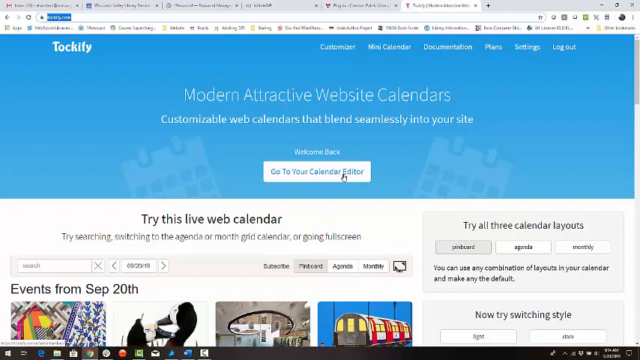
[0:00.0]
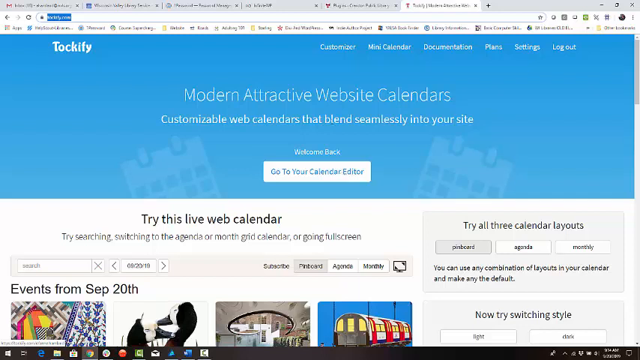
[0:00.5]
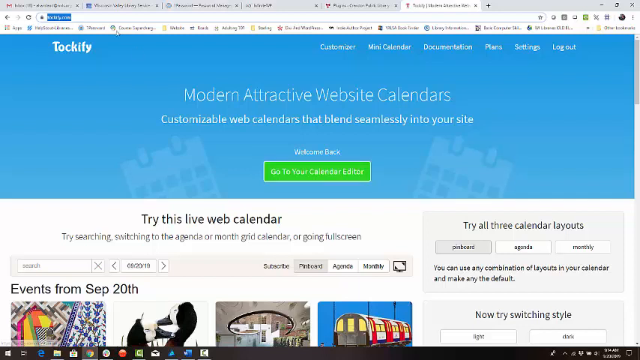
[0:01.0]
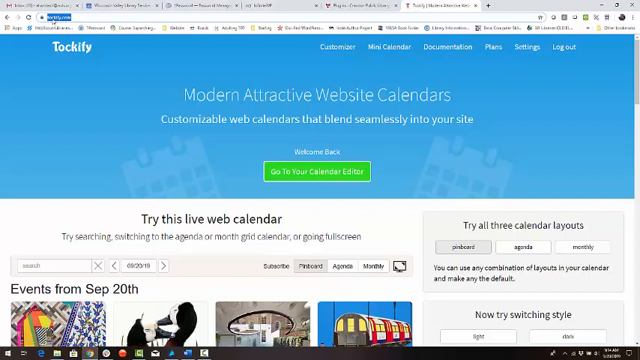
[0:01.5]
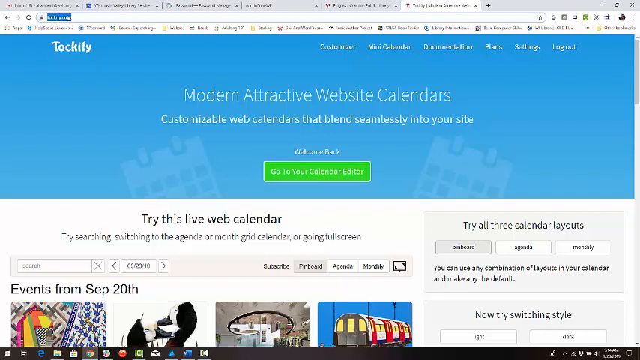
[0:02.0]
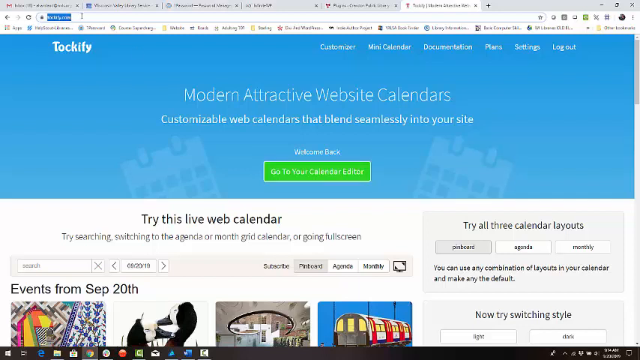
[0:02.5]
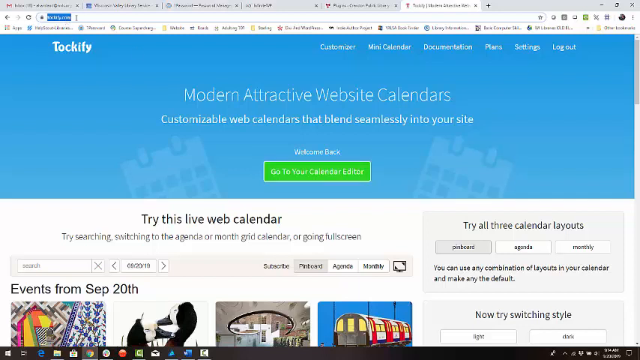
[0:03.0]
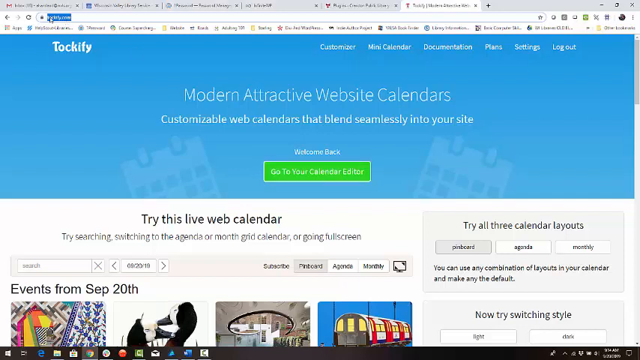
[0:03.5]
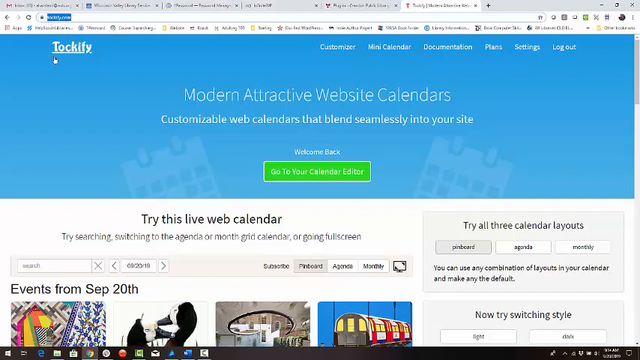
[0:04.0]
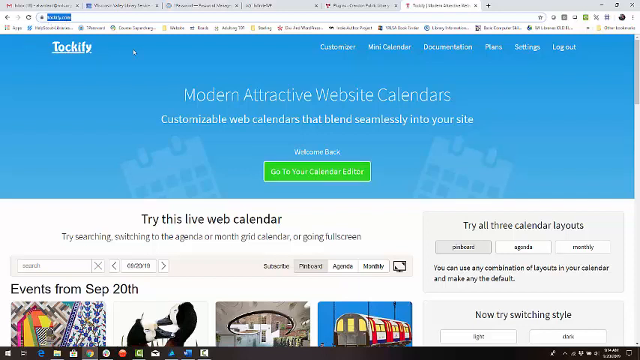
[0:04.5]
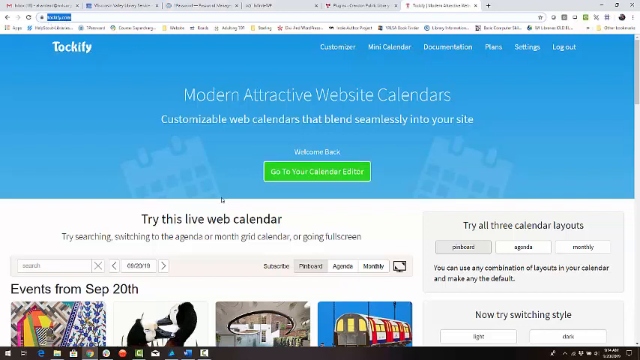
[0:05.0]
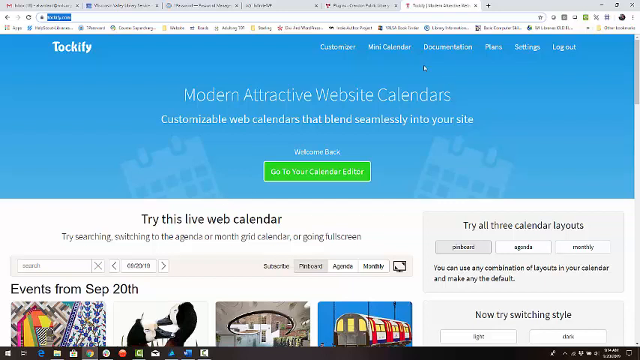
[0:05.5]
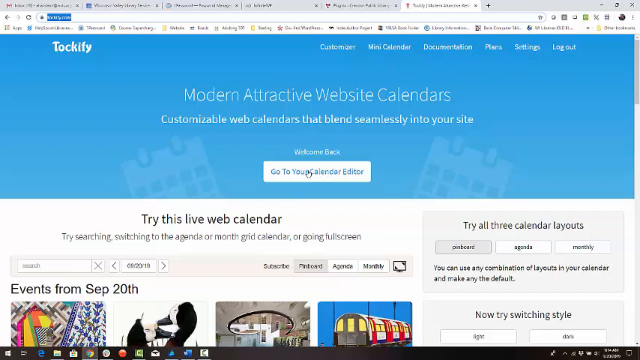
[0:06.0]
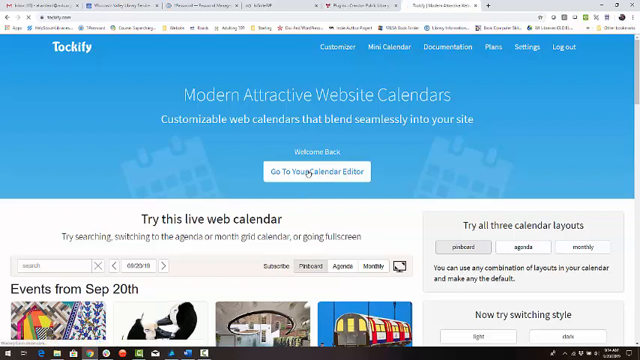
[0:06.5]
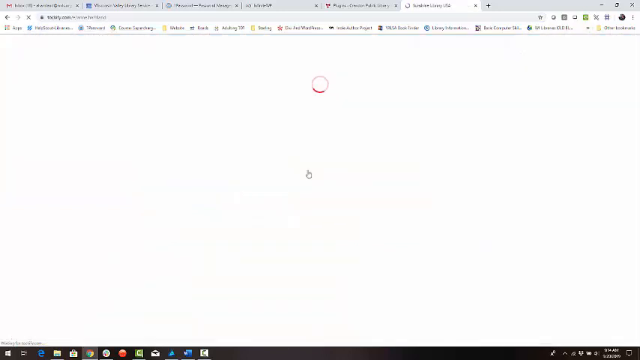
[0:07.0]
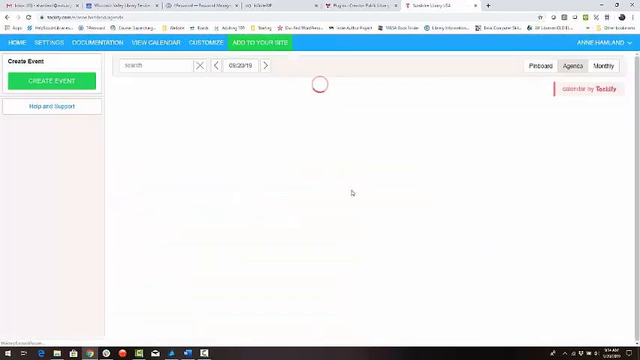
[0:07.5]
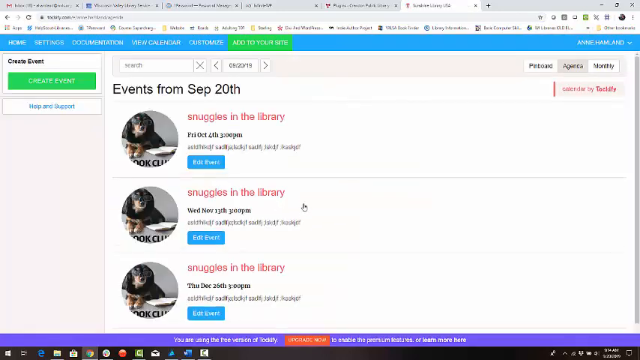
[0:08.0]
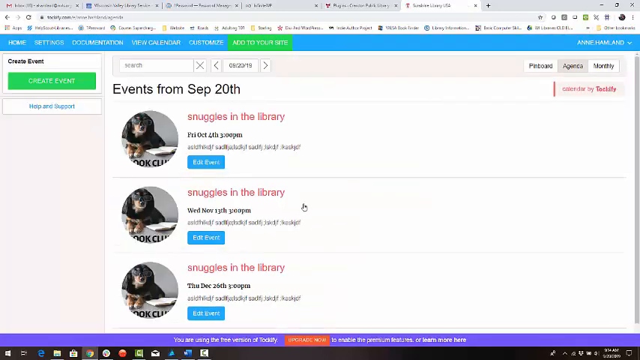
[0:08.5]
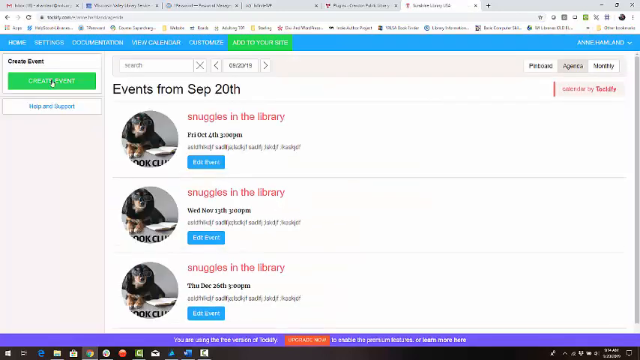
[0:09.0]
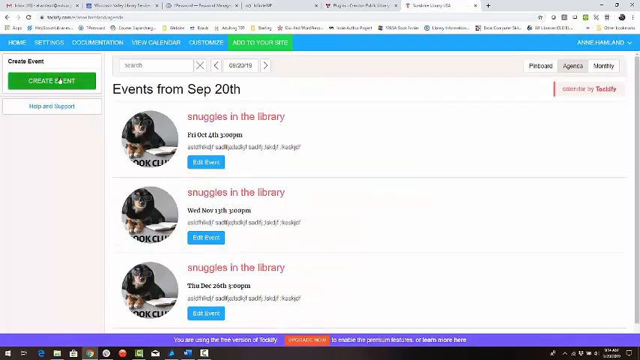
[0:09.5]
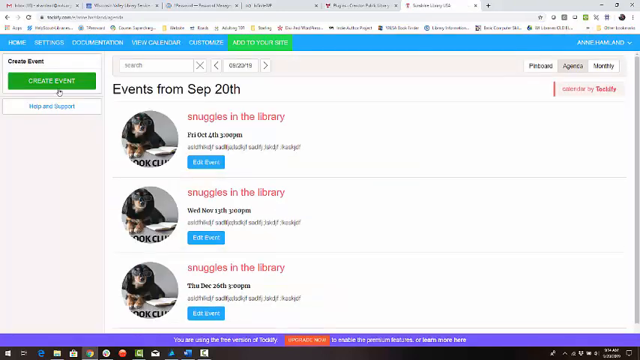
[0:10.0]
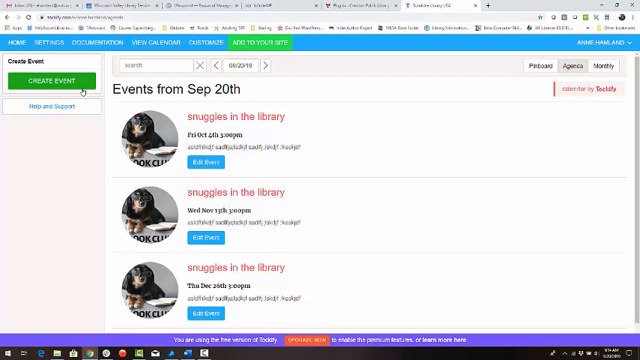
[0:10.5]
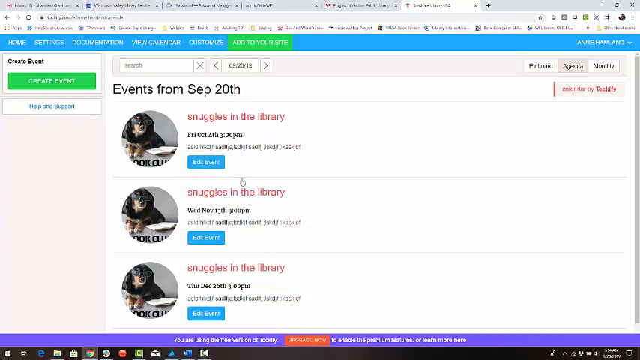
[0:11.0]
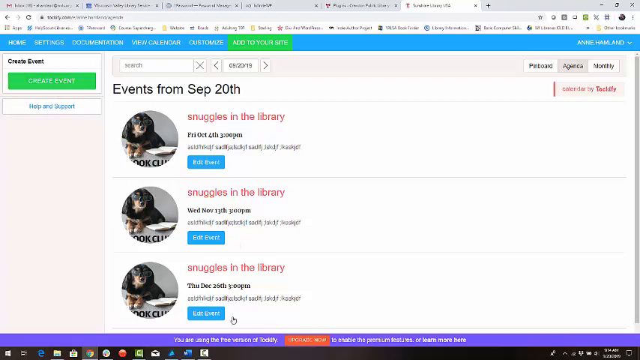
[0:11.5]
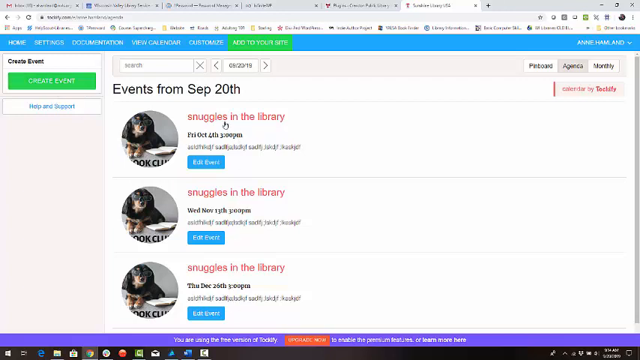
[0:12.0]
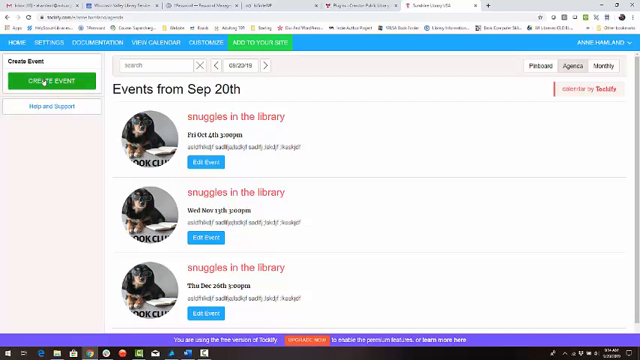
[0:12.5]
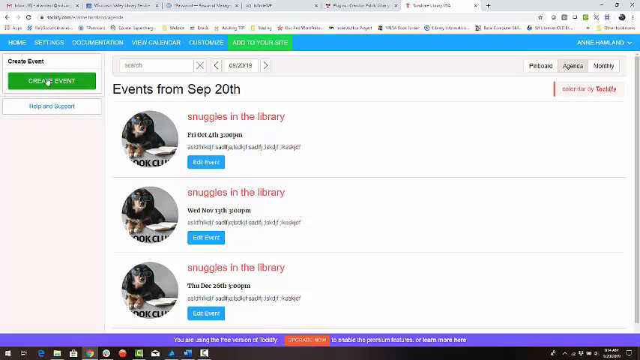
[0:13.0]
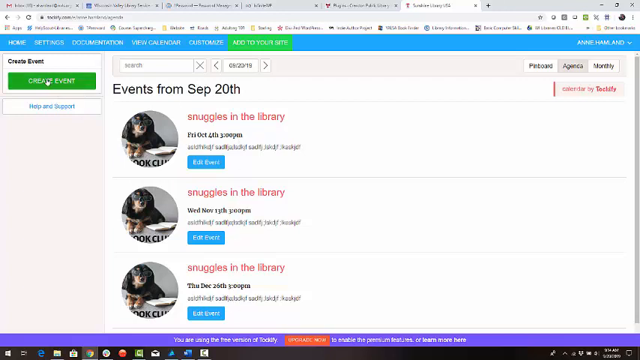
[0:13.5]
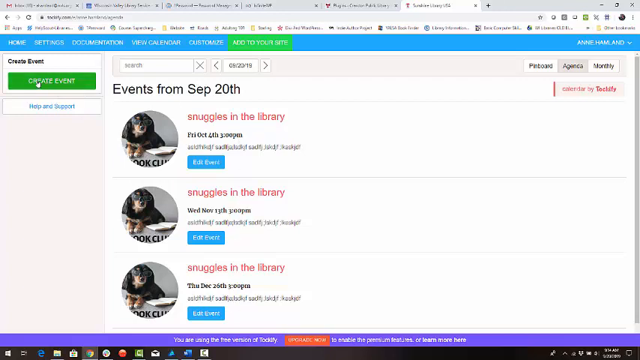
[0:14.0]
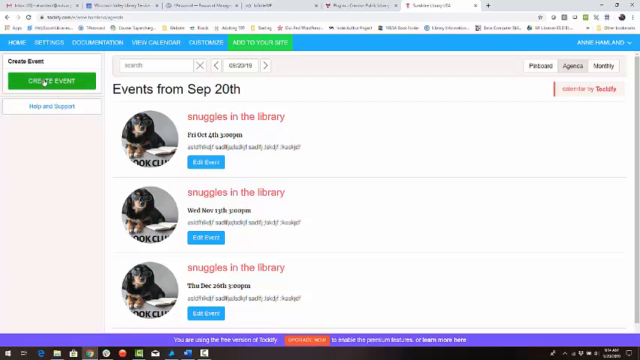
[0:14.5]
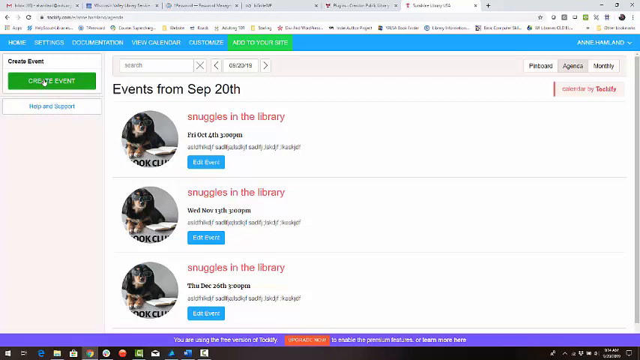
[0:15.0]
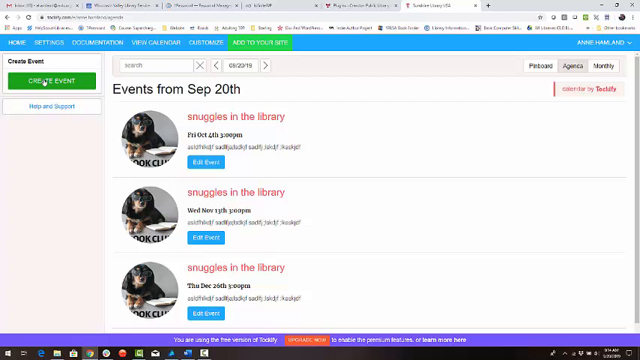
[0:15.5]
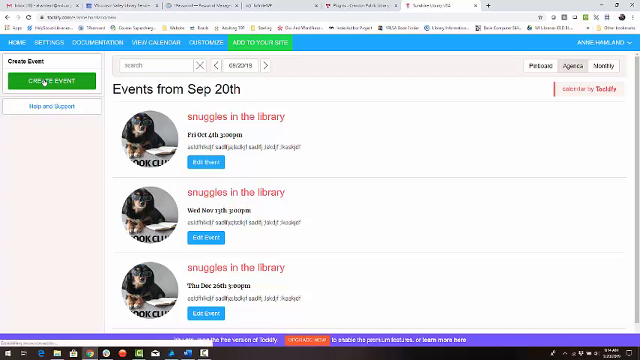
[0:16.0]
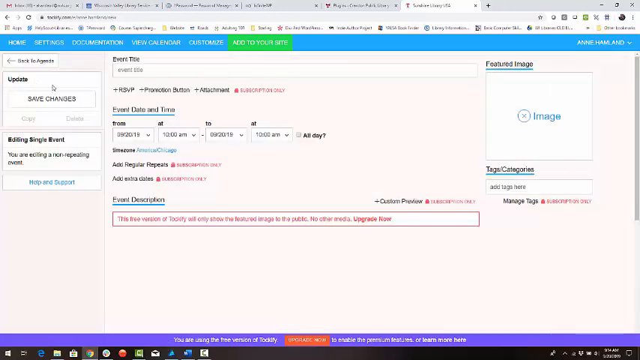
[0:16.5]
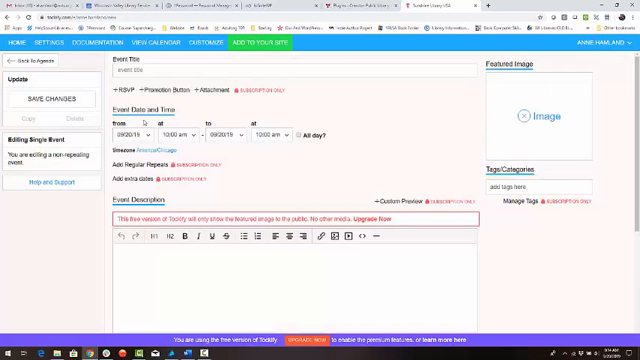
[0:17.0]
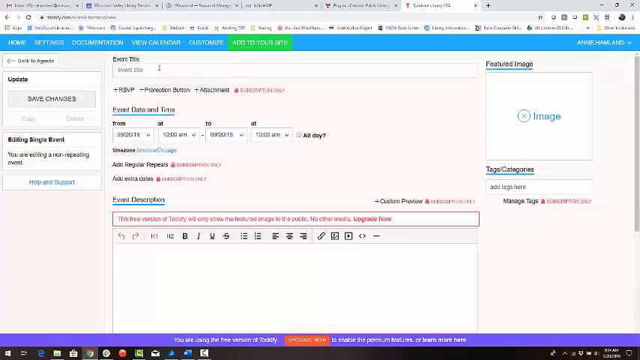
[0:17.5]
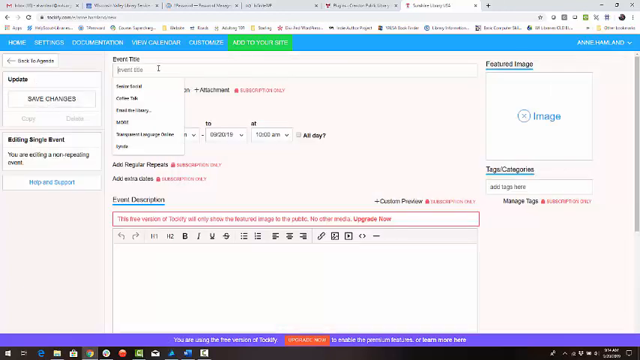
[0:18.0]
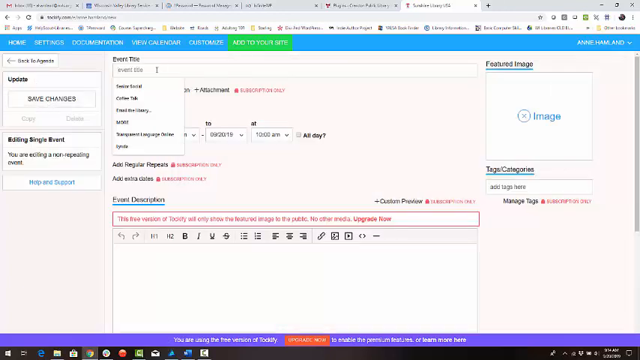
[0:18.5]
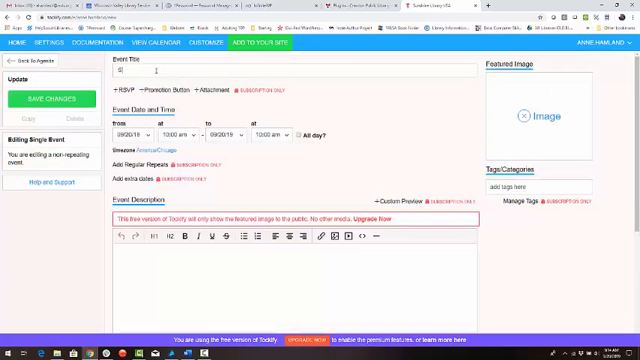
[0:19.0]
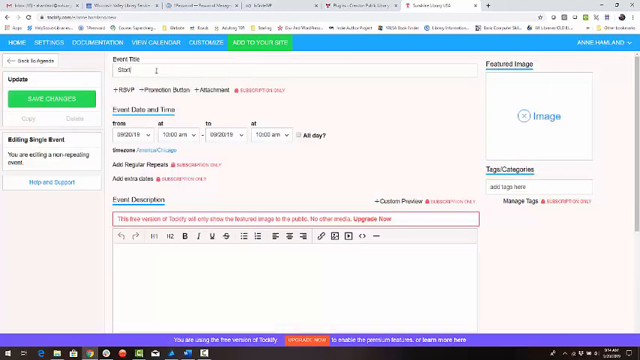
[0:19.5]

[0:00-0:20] A website shows the name "Talkify" in the top left and a header that reads "modern attractive website calendars." The user appears to be in the address bar, which is highlighted. The cursor moves over a green button, which turns white, and the user clicks it. The site navigates to another window with black text at the top reading "events from September 20th." On the top left side is a green button with white text reading "create event." The cursor moves around the screen and eventually clicks the button, which leads to another part of the website. There, the user clicks a drop-down menu, and a menu of options in black text appears. The user then seems to type something into a search bar.